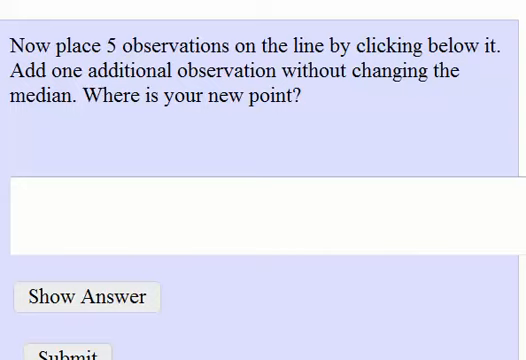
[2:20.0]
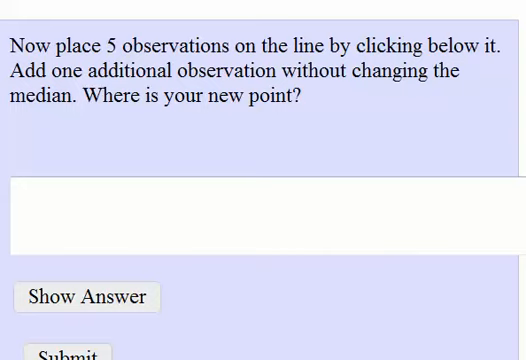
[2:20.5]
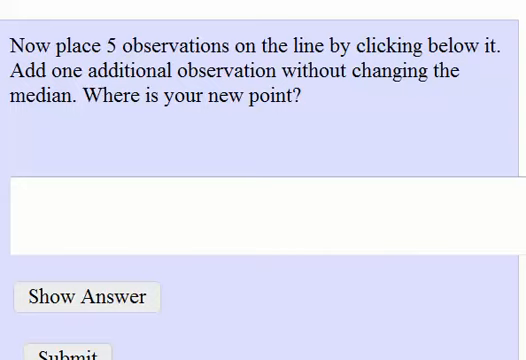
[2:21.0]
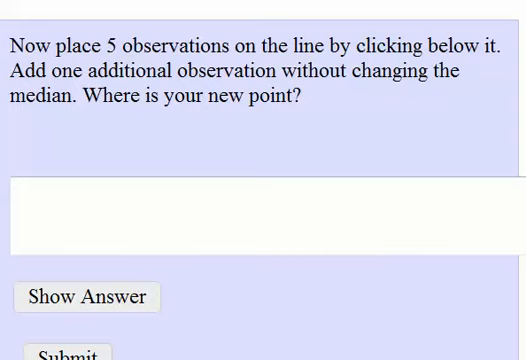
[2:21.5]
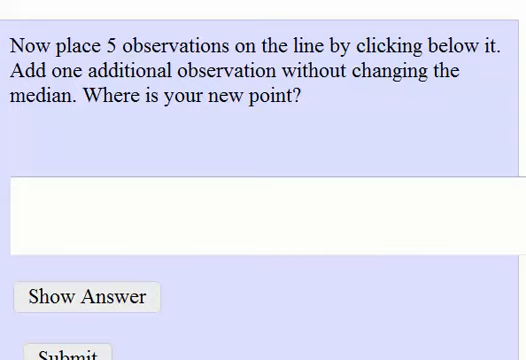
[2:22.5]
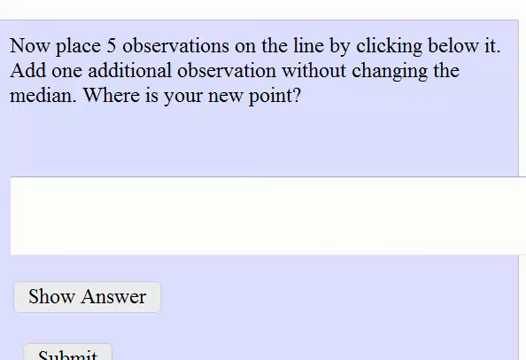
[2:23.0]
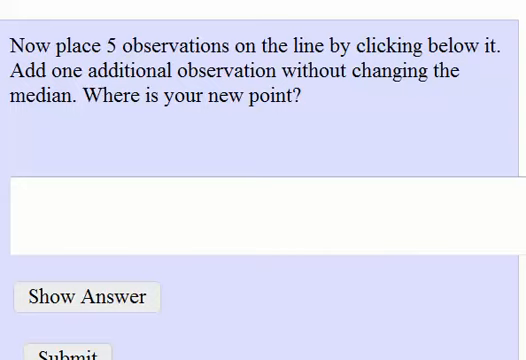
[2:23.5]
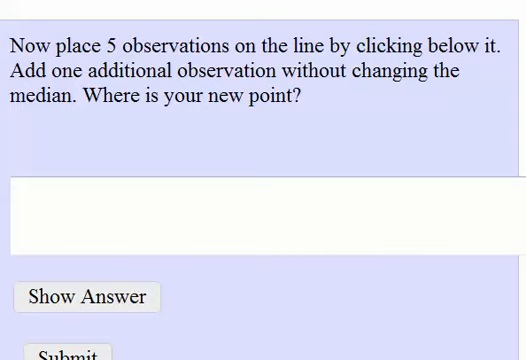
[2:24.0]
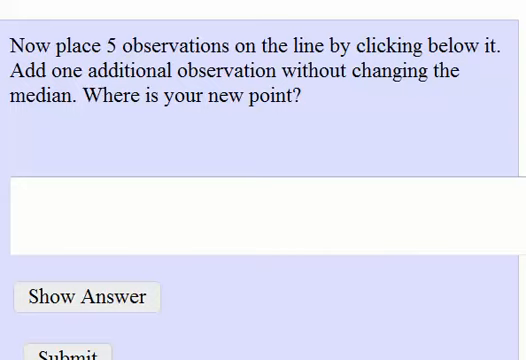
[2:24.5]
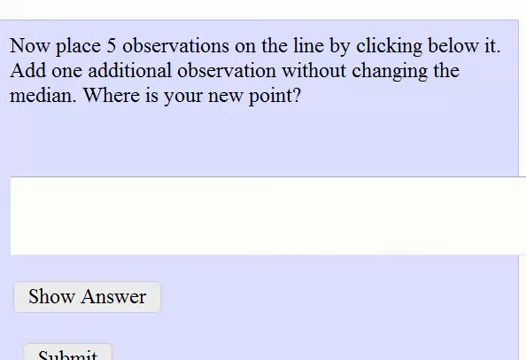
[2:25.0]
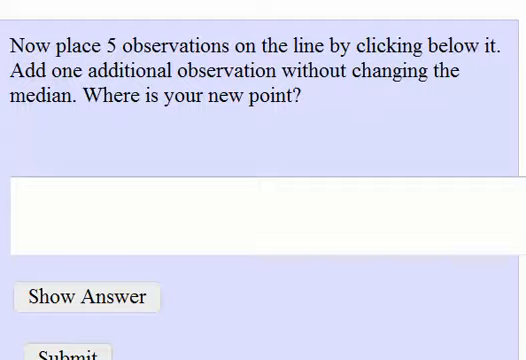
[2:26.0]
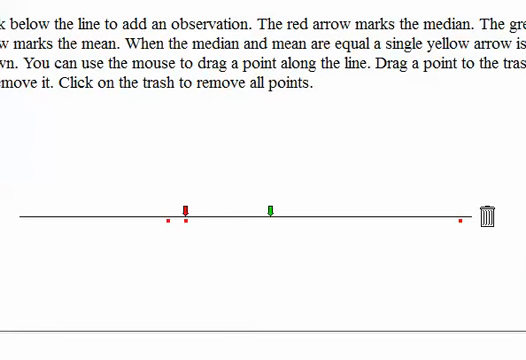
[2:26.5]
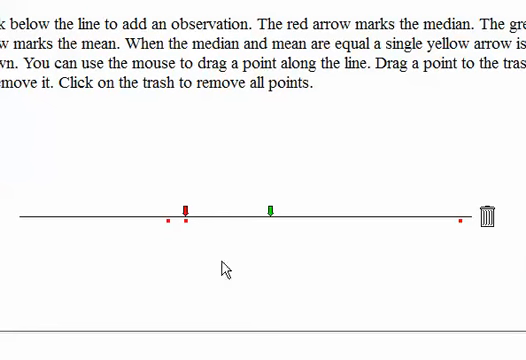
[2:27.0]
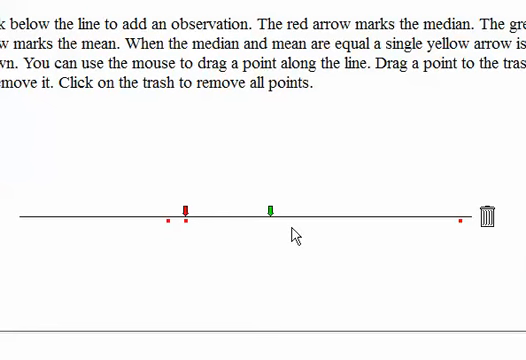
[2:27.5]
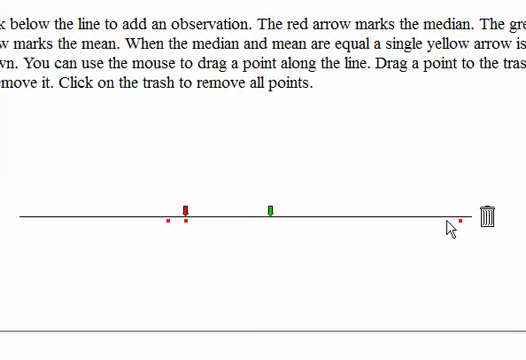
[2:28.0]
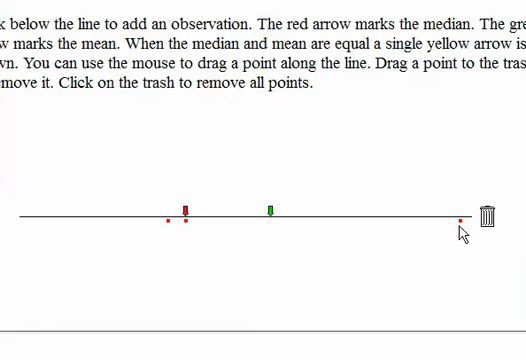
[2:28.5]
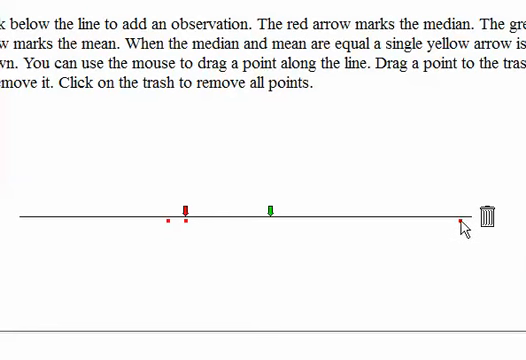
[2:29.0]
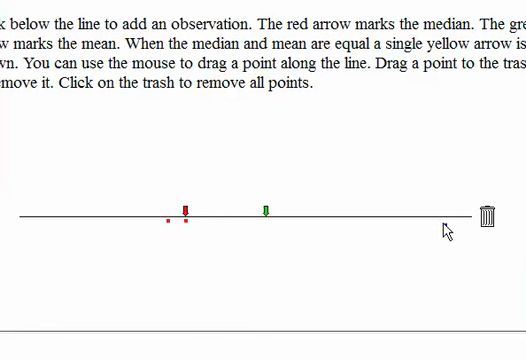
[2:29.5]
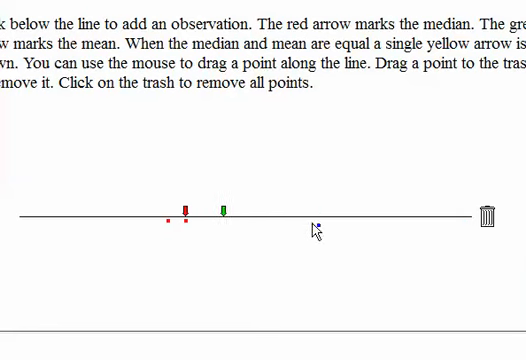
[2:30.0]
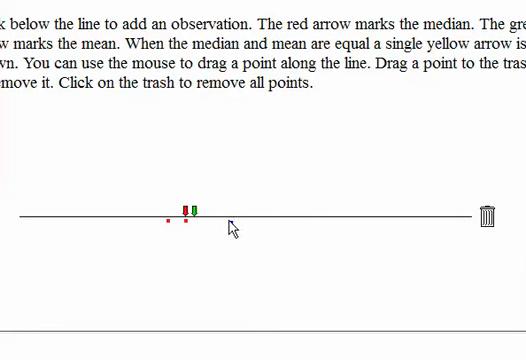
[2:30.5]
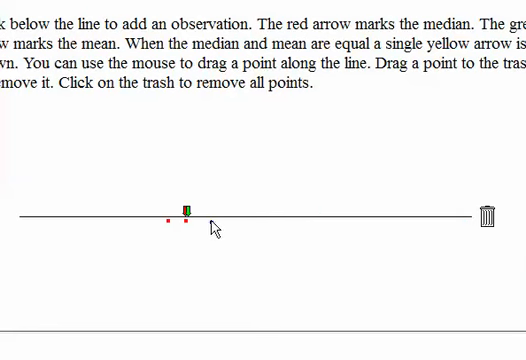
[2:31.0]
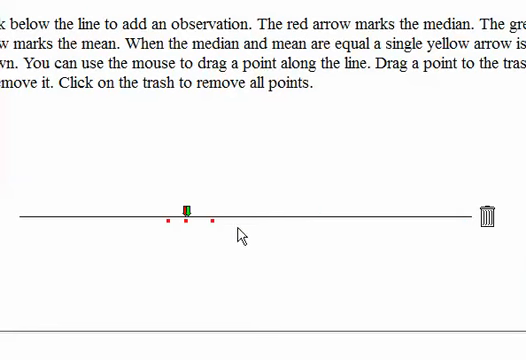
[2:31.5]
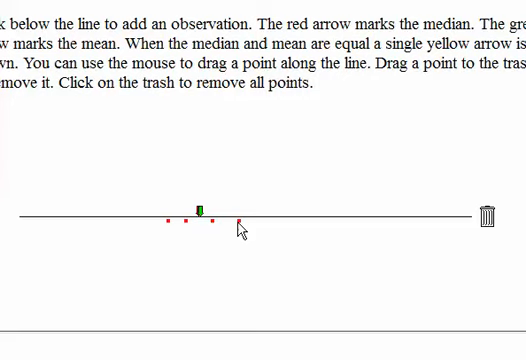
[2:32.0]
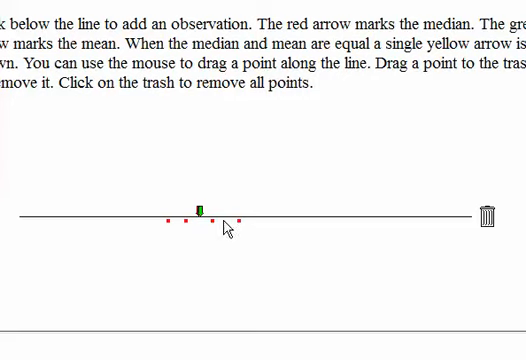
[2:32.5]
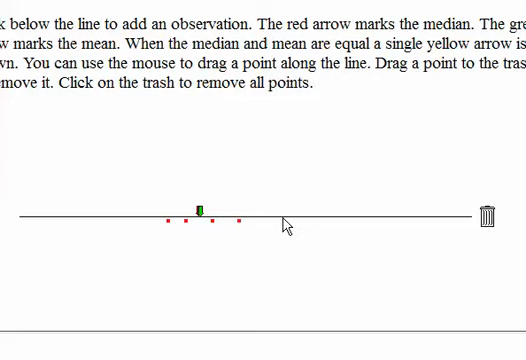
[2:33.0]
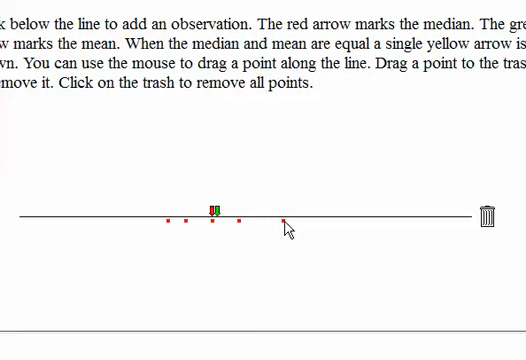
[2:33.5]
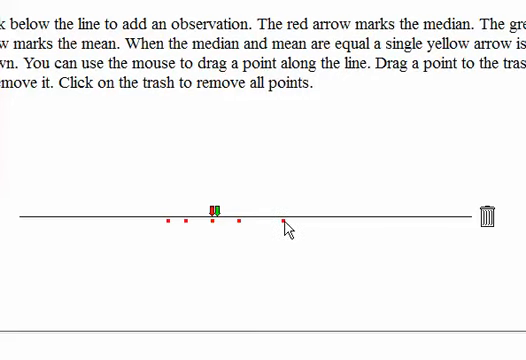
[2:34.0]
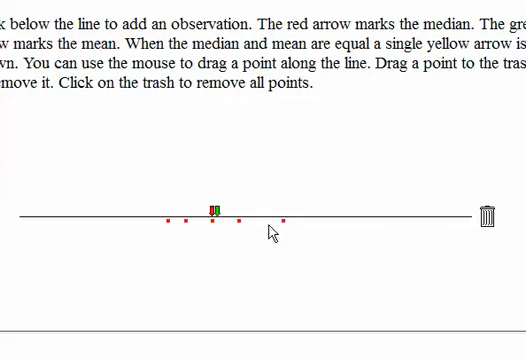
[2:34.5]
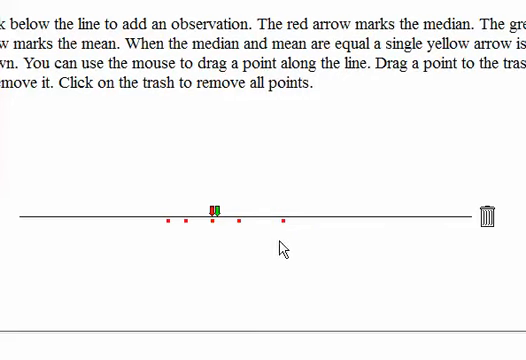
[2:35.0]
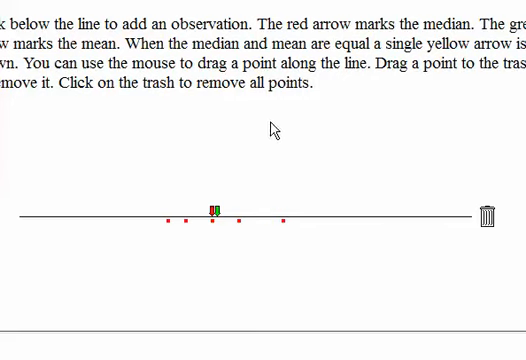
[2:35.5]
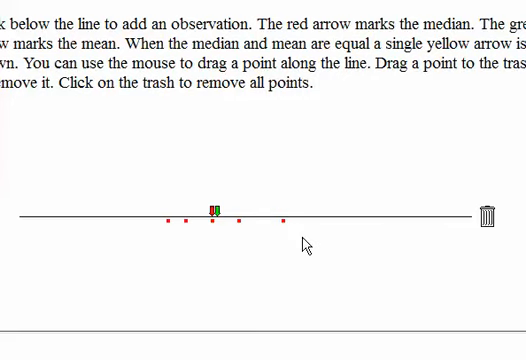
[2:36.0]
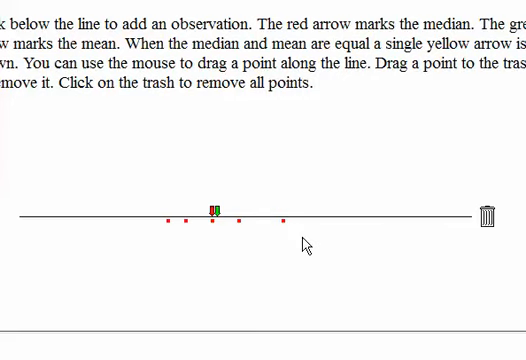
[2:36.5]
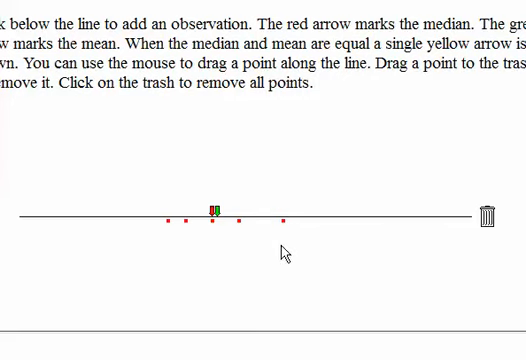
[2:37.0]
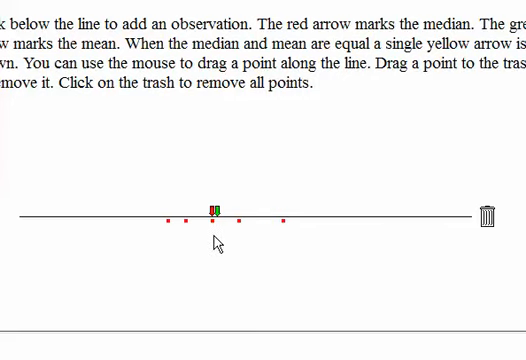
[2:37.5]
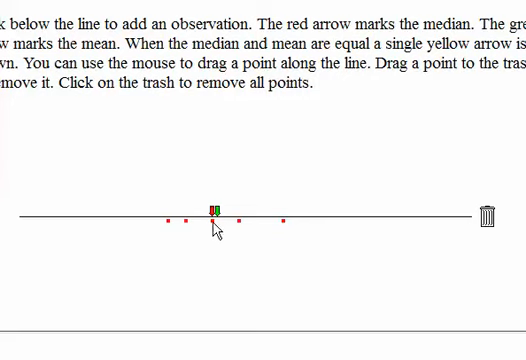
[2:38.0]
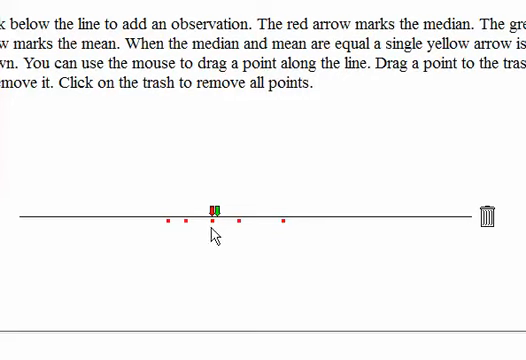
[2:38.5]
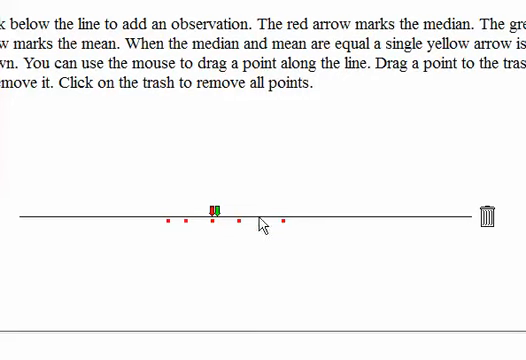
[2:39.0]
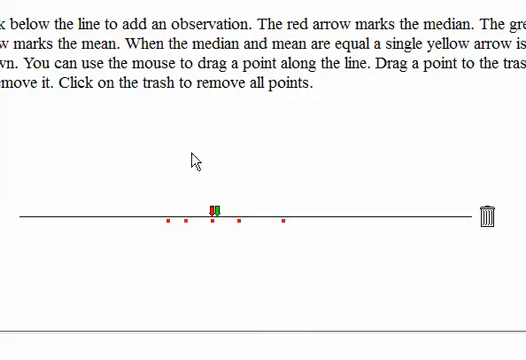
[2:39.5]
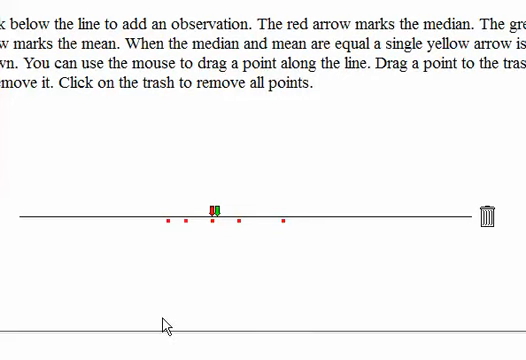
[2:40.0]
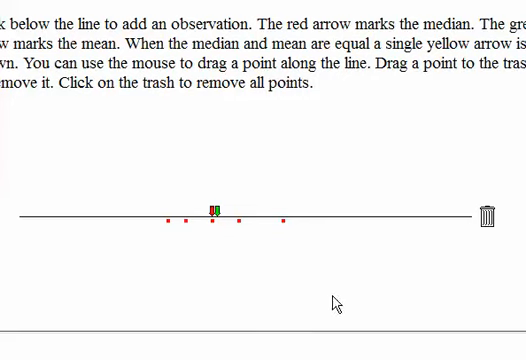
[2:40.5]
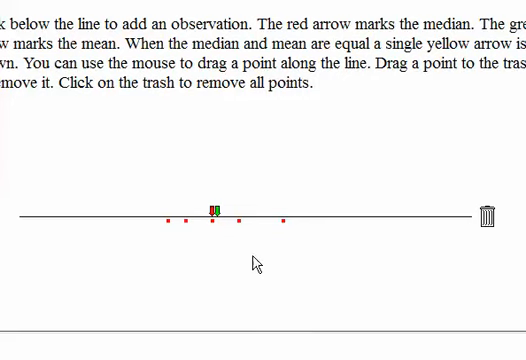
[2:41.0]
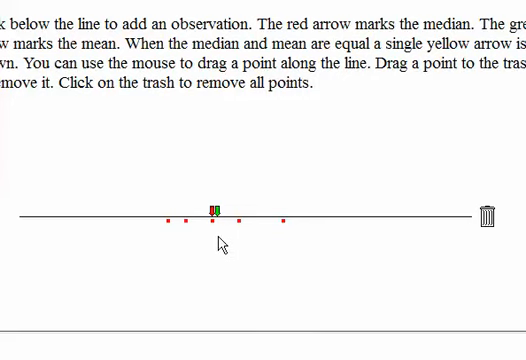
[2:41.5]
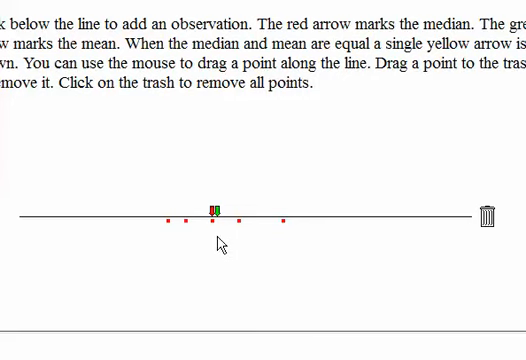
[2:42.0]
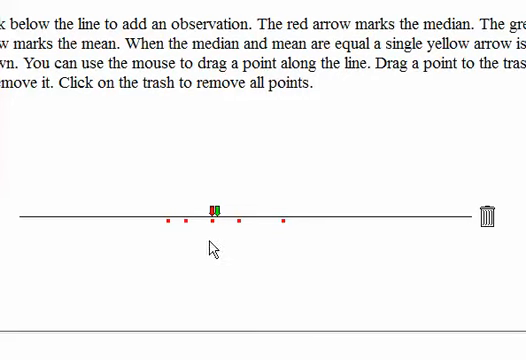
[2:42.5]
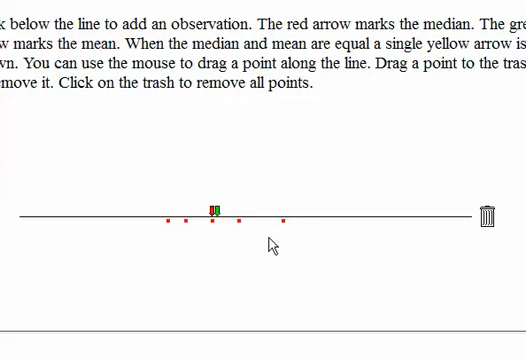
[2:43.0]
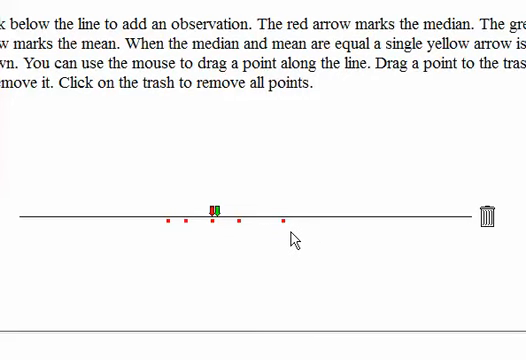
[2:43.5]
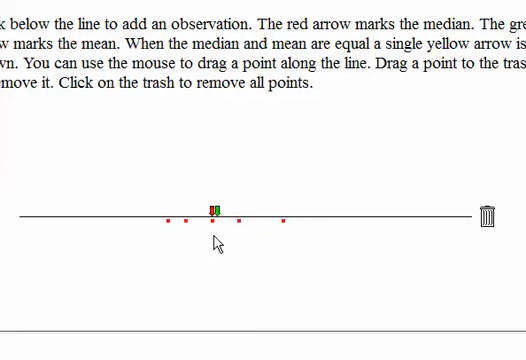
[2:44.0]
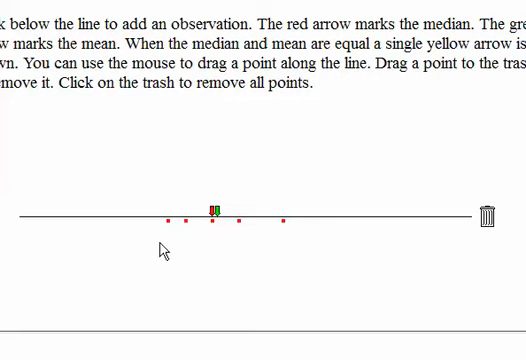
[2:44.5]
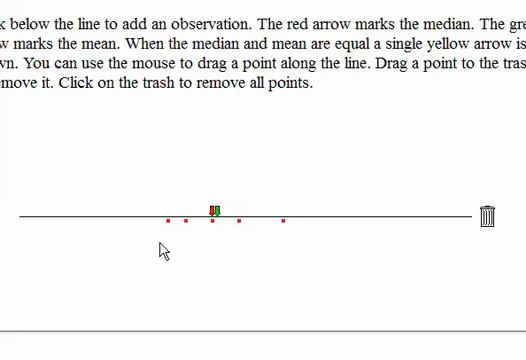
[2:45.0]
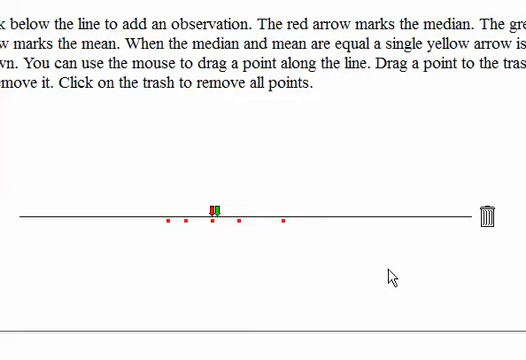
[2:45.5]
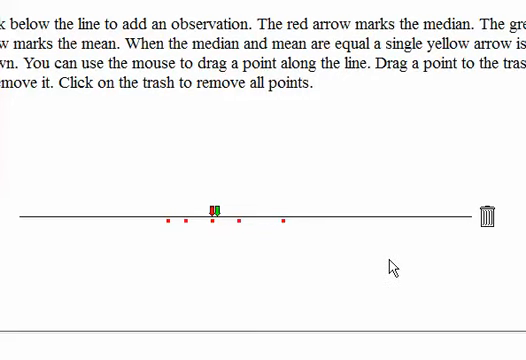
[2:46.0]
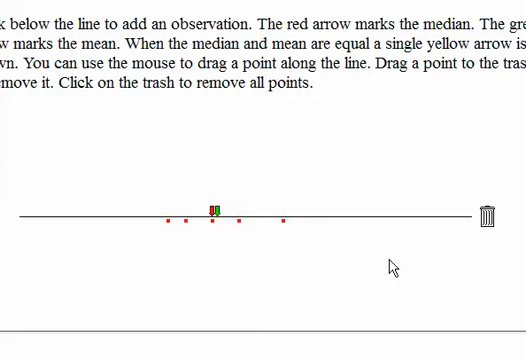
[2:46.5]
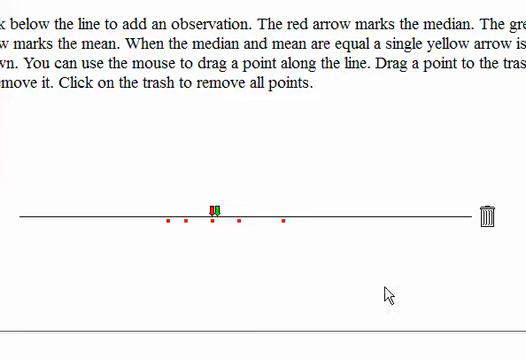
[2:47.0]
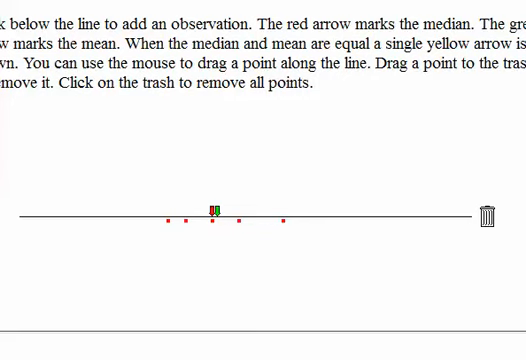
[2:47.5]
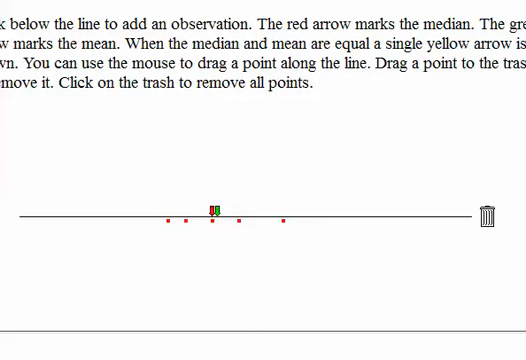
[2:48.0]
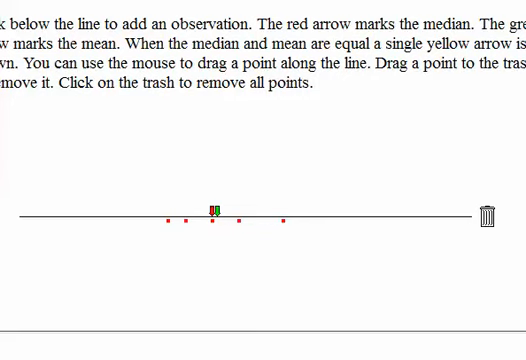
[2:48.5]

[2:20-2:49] The next quiz question reads "now place five observations on the line by clicking below it. Add one additional observation without changing the median. Where is your new point?" with a text box for the answer. The video goes back to the applet, where the user places three, then four, then five observations below the line, also moving them around with the mouse pointer. Two arrows are above the line, a red arrow and a green arrow, both pointing down. The user hovers the mouse pointer around the dots on the bottom and the arrows on the top, apparently as if explaining something. Text at the top of the screen is cut off and hard to read. To the right of the line is a trash can that can be clicked to remove everything above and below the line.